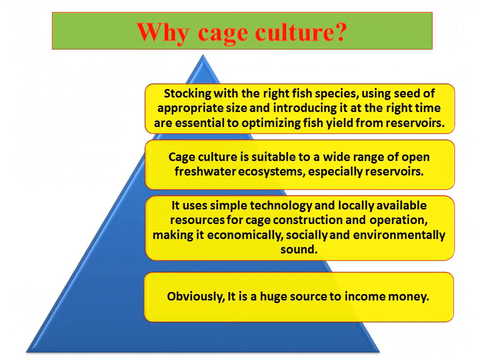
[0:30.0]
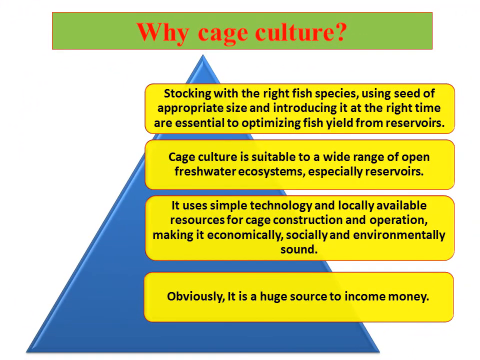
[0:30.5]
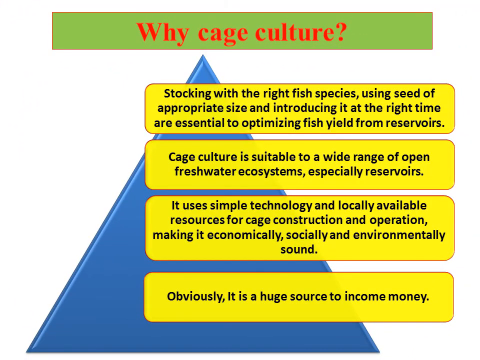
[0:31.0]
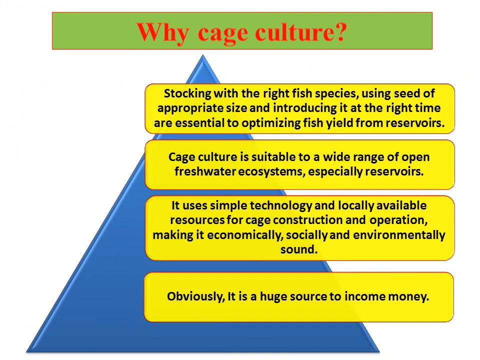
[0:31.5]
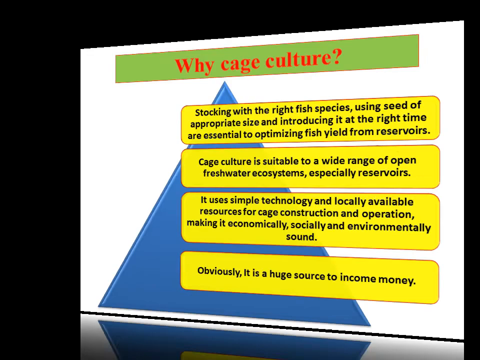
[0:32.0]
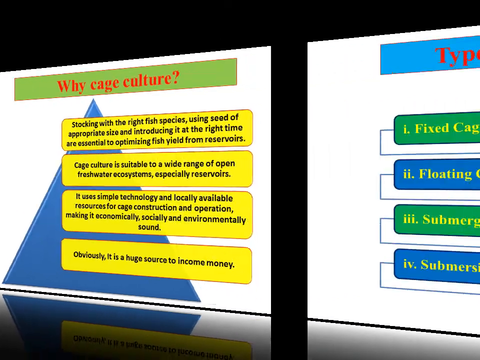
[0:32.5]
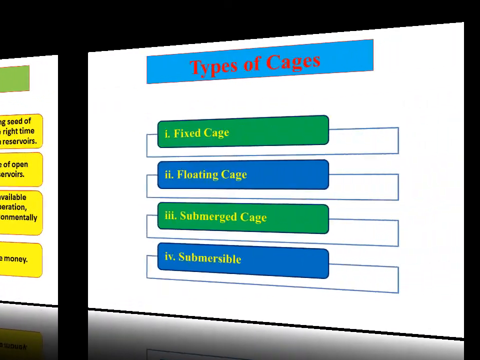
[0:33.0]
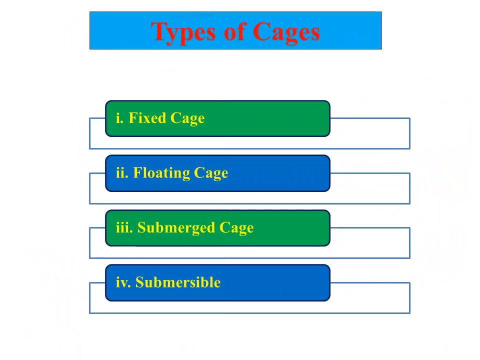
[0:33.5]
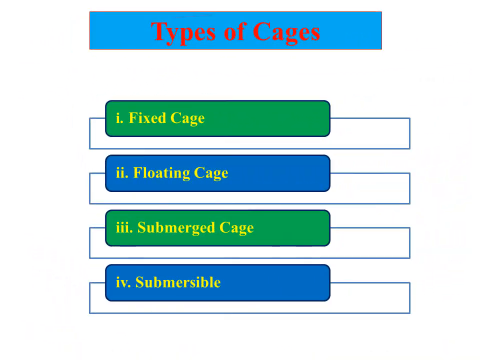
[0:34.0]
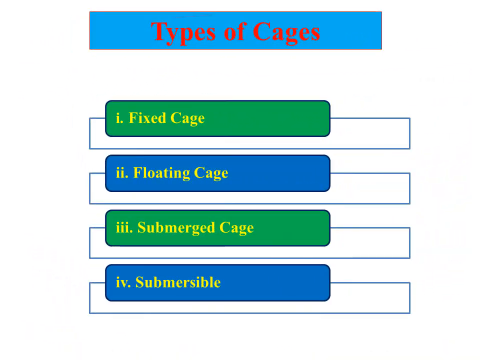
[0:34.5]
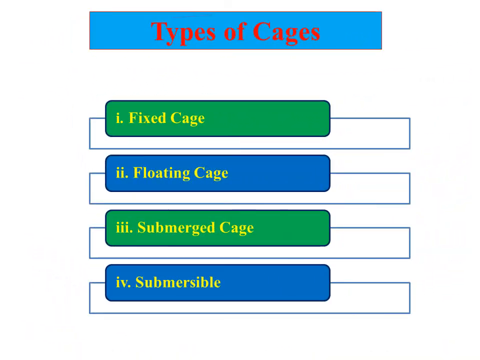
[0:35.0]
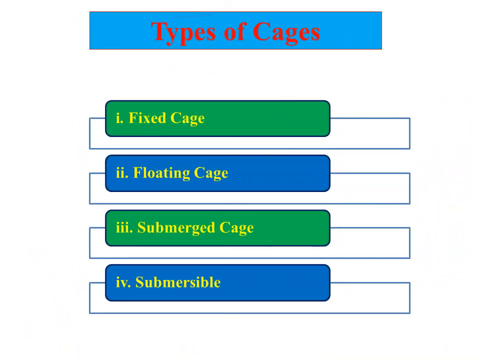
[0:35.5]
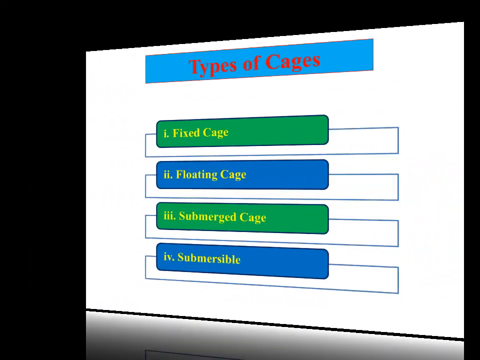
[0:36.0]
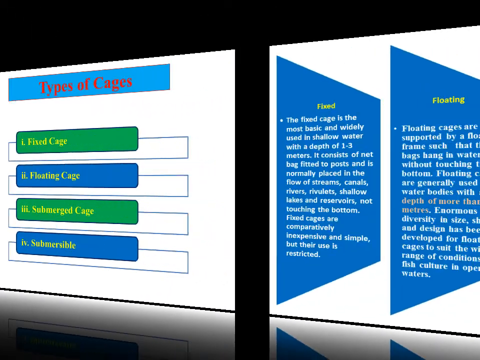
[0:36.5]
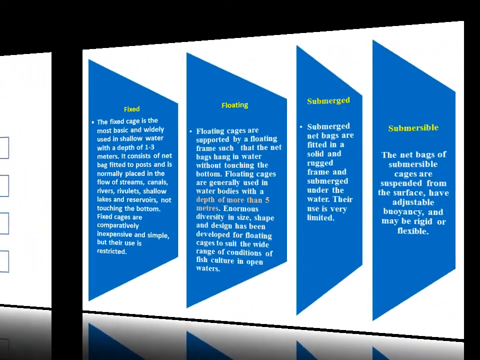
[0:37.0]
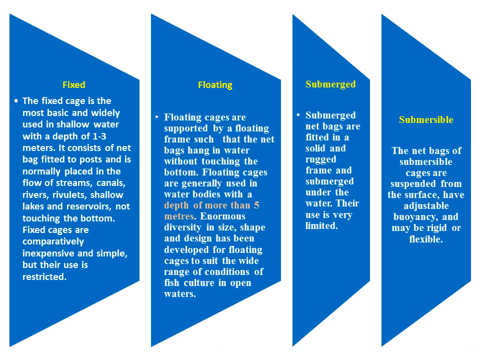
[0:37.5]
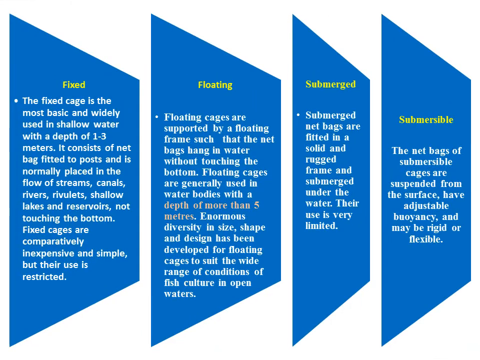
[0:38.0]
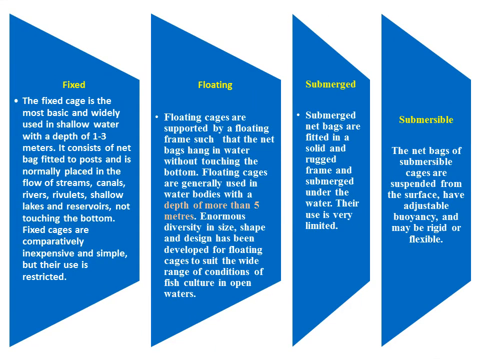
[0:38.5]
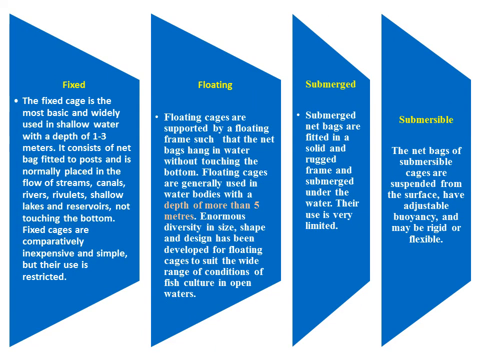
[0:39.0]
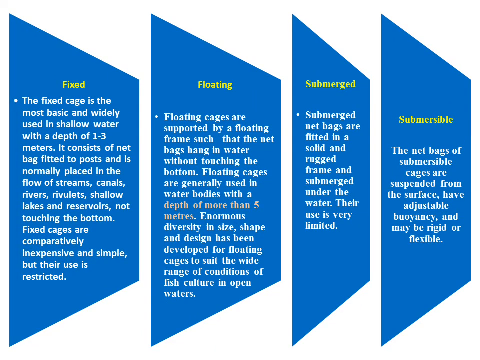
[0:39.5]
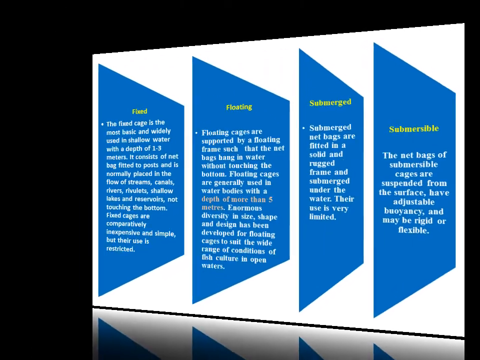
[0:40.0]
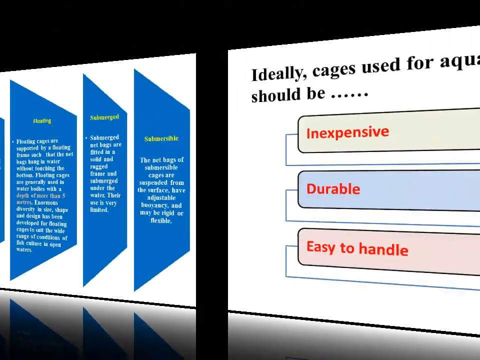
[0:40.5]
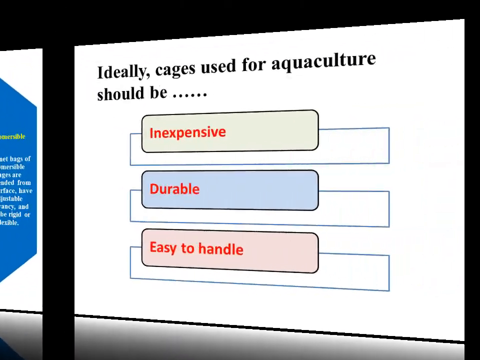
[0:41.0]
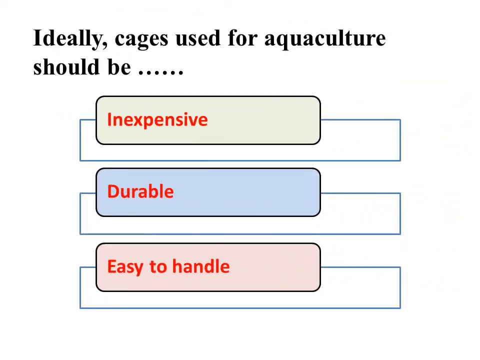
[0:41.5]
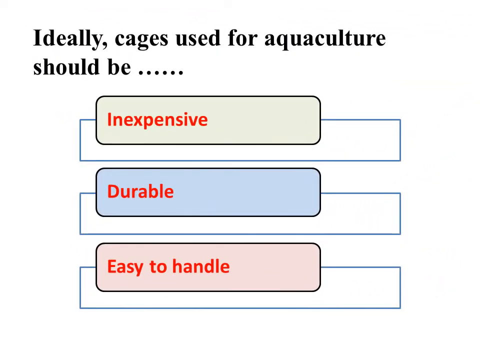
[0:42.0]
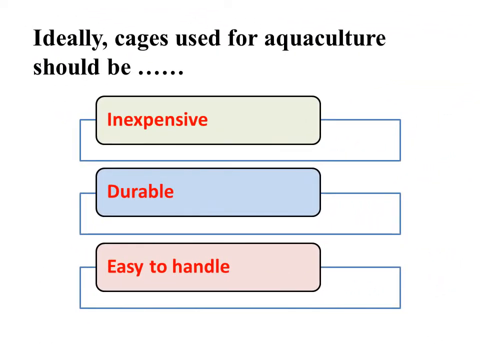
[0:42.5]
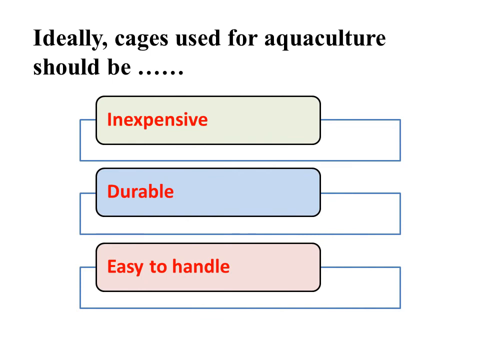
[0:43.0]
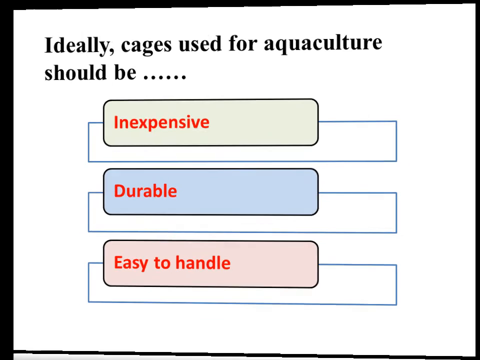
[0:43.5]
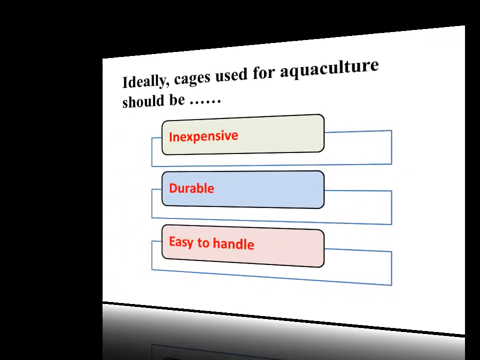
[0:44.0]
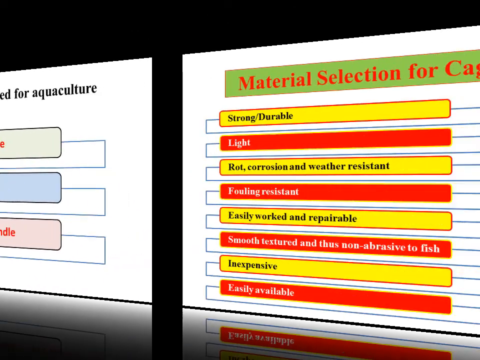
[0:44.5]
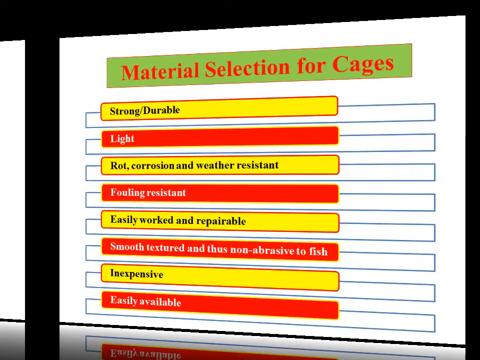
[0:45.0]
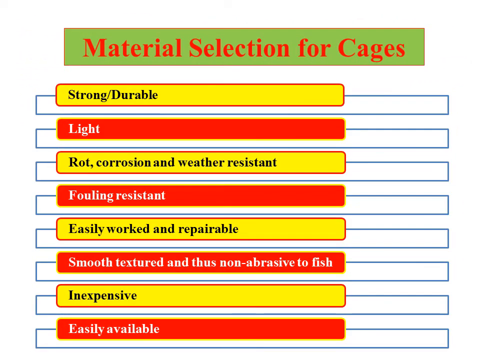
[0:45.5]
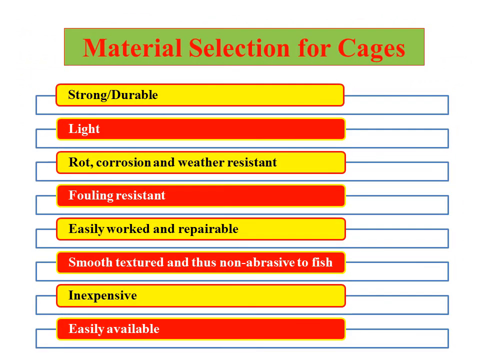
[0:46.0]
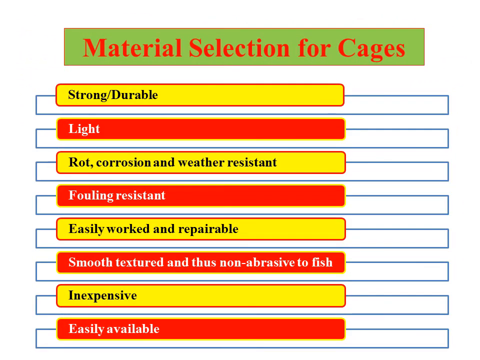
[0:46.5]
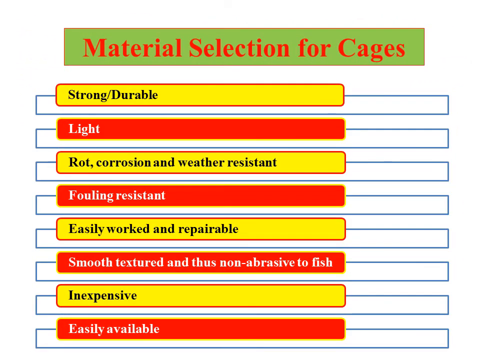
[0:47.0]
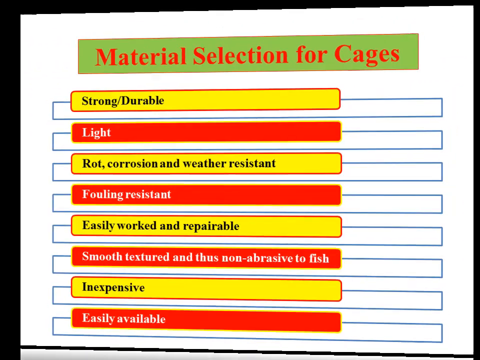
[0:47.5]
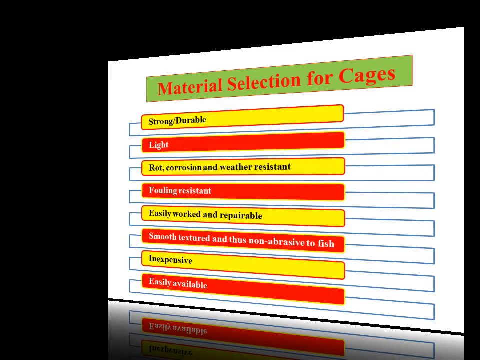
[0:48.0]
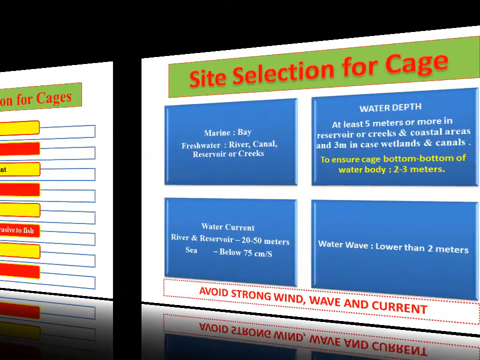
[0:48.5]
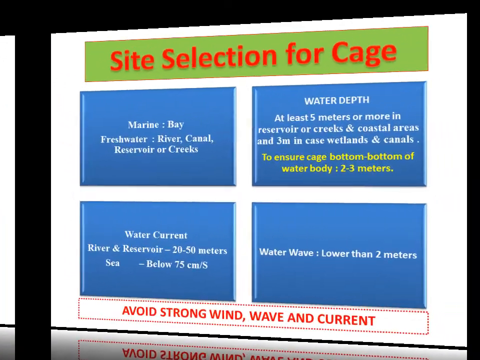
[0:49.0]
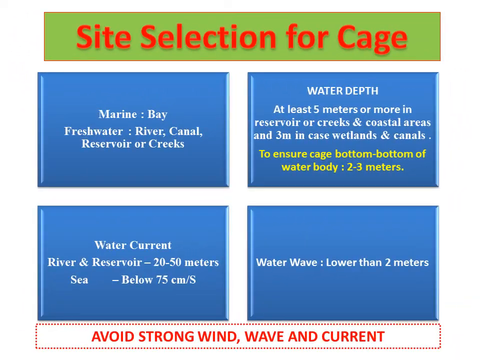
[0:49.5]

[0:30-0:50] A slide on types of cages lists four types: fixed, floating cage, submerged cage, and submersible. The next slide describes each: a fixed cage is the most basic and most used, inexpensive and simple but restricted; a floating cage is supported by a frame with bags hanging underneath that do not touch the bottom, and it must be in bodies of water deeper than five meters; a submerged cage consists of net bags fitted in a solid frame and submerged under the water; a submersible is a net bag suspended from a surface, with adjustable buoyancy. Ideally, cages used for aquaculture should be inexpensive, durable, and easy to handle. The following slide states that materials selected for cages should be strong and durable yet light; rot, corrosion, weather and fouling resistant; easily worked and repairable; smooth textured and thus non-abrasive to the fish; and inexpensive and easily available.